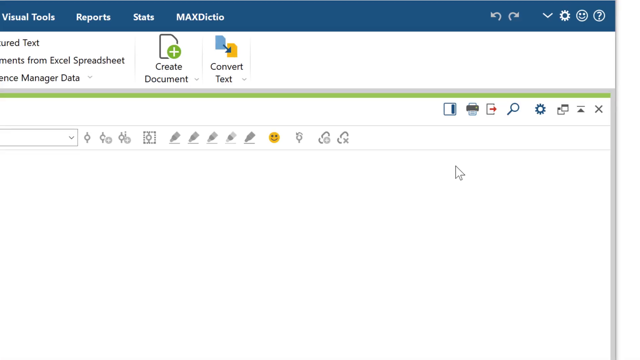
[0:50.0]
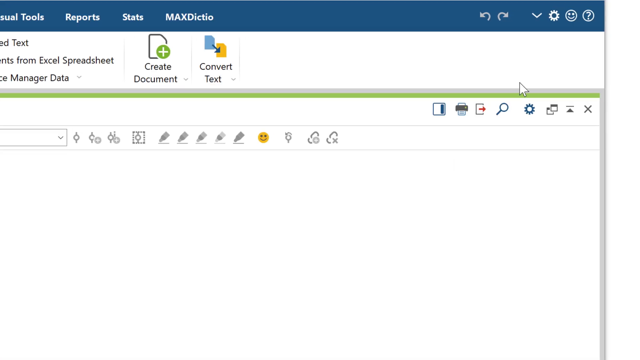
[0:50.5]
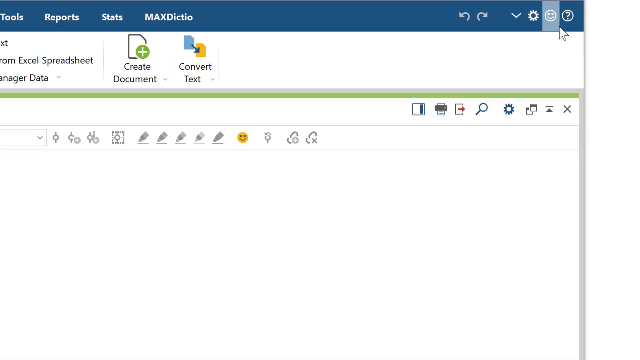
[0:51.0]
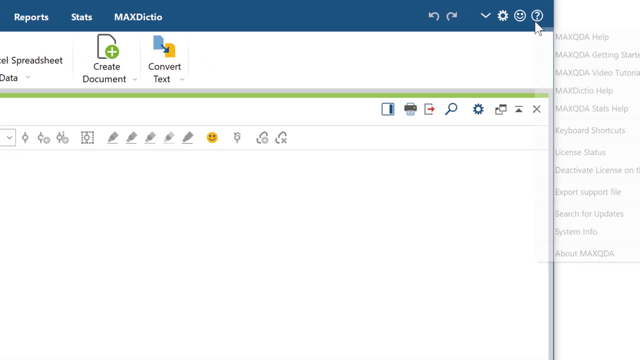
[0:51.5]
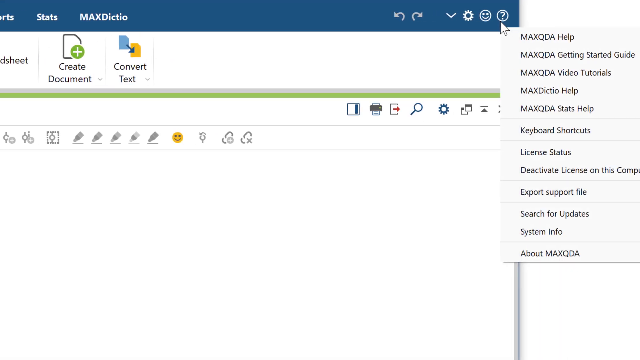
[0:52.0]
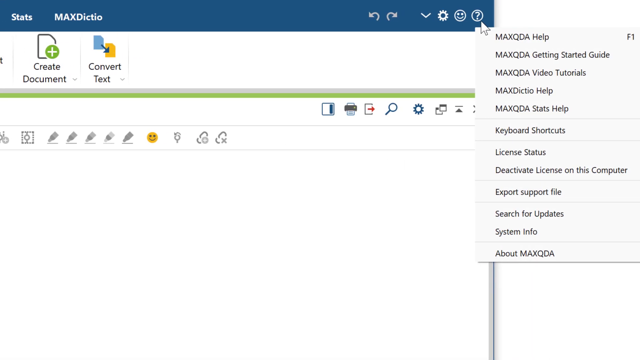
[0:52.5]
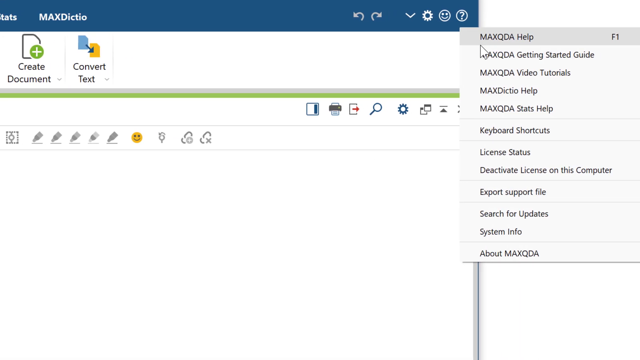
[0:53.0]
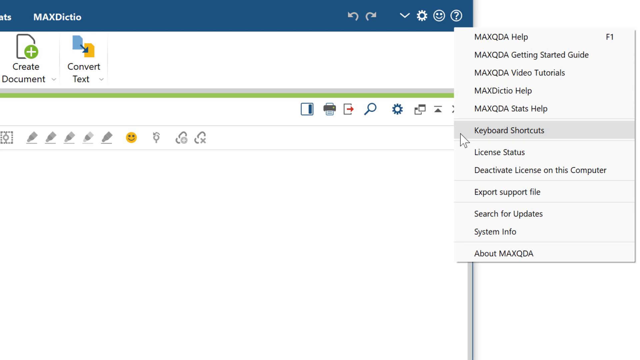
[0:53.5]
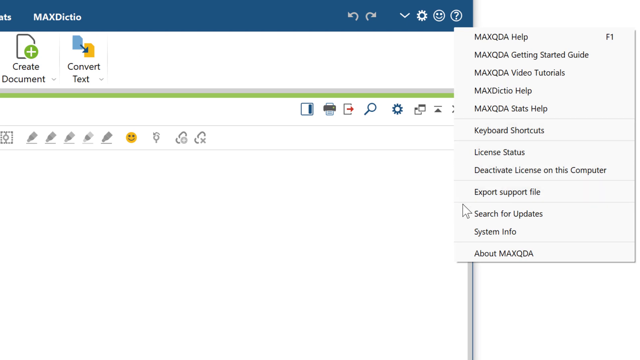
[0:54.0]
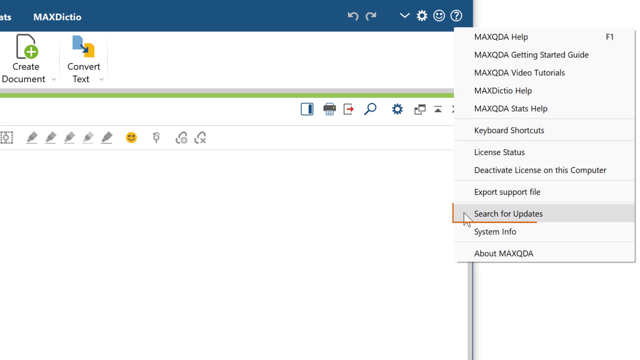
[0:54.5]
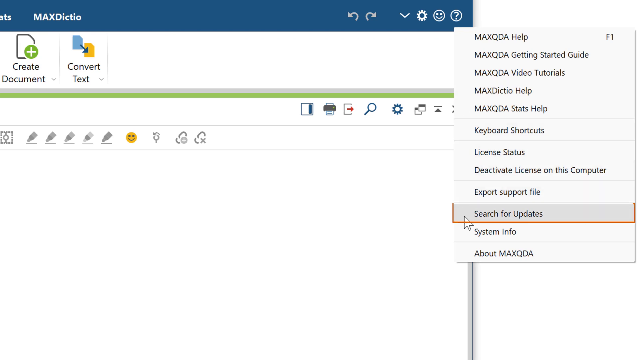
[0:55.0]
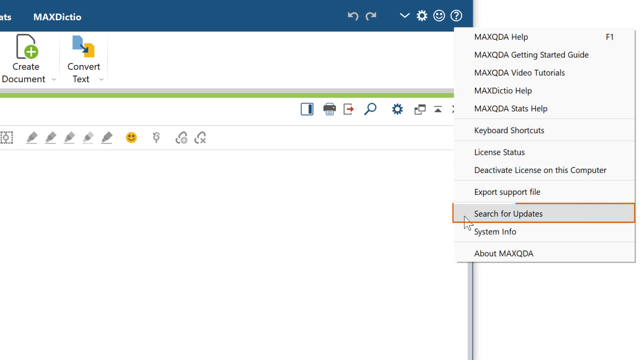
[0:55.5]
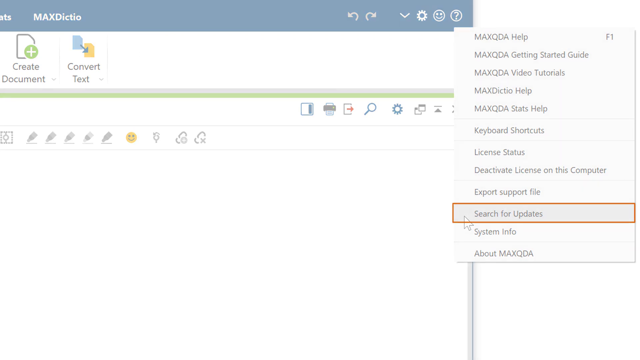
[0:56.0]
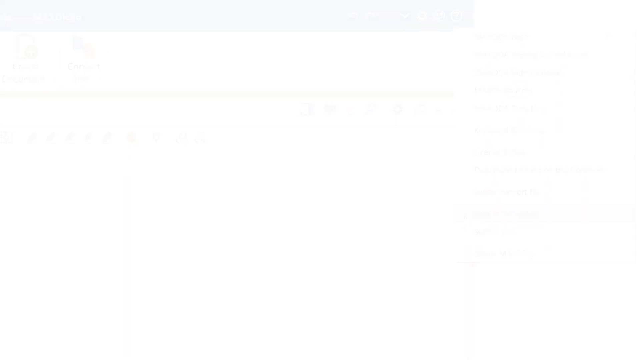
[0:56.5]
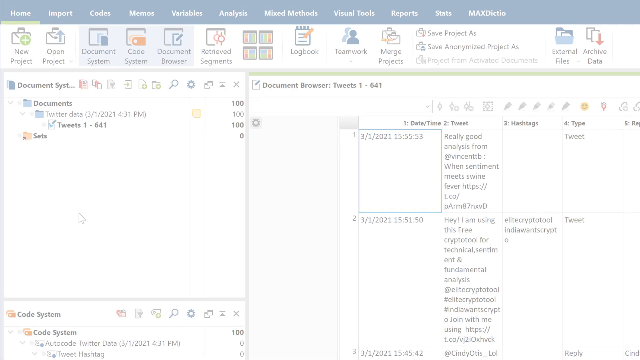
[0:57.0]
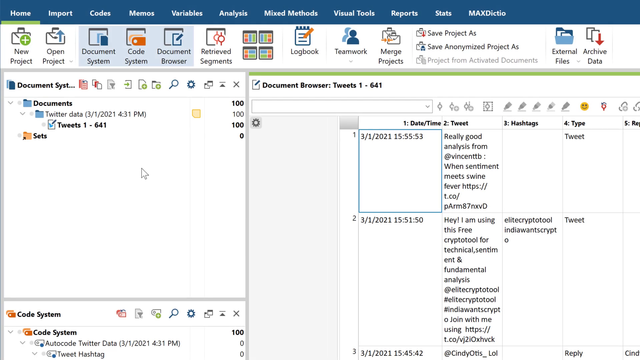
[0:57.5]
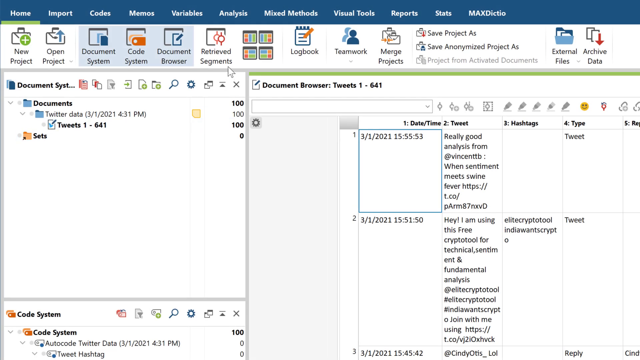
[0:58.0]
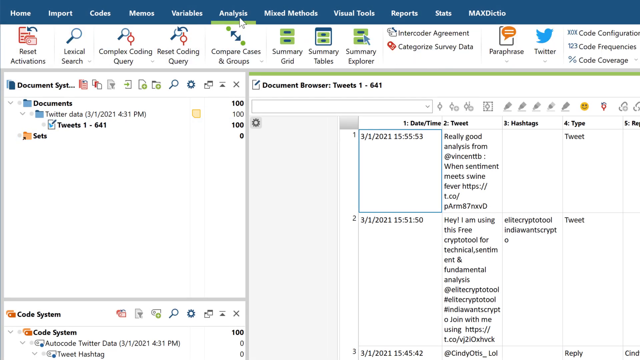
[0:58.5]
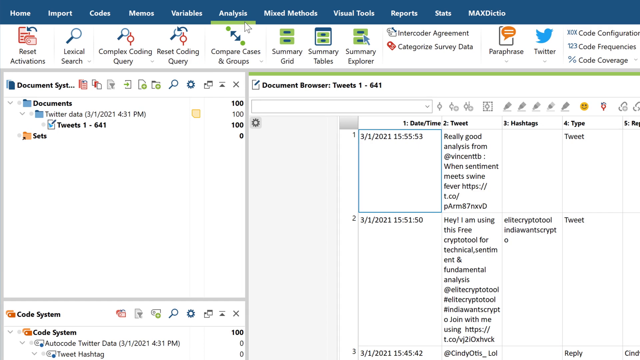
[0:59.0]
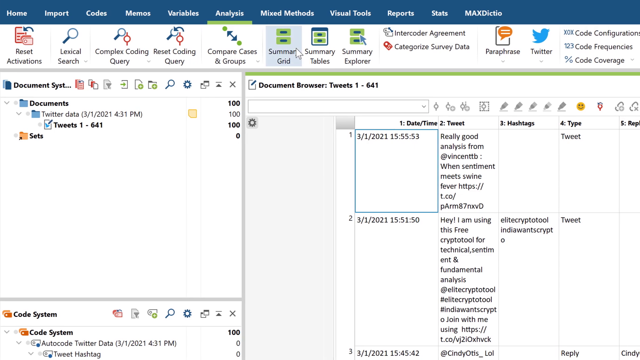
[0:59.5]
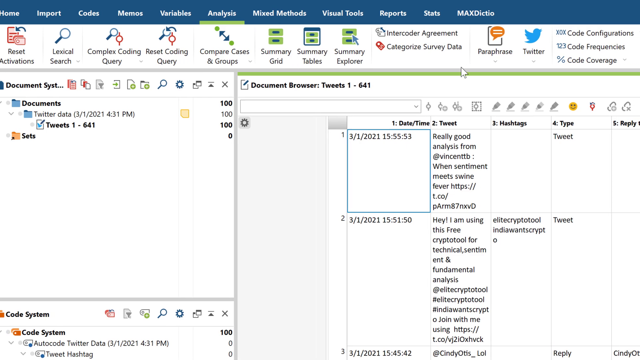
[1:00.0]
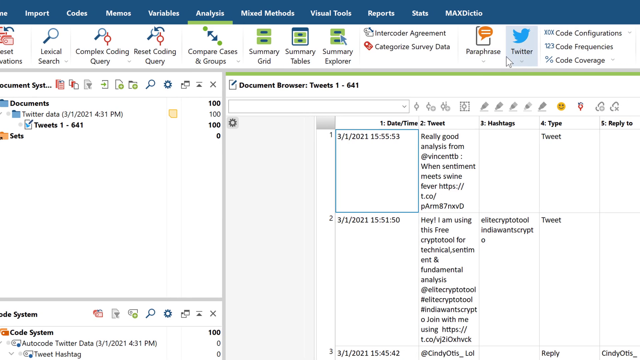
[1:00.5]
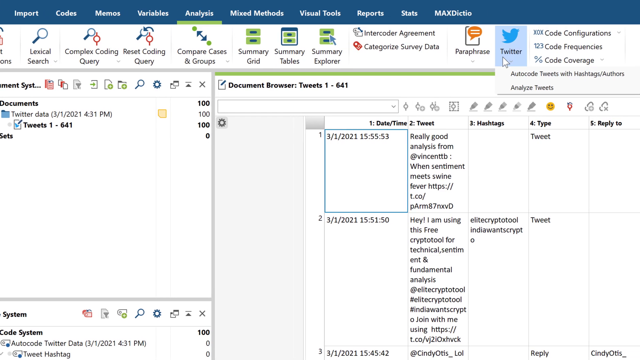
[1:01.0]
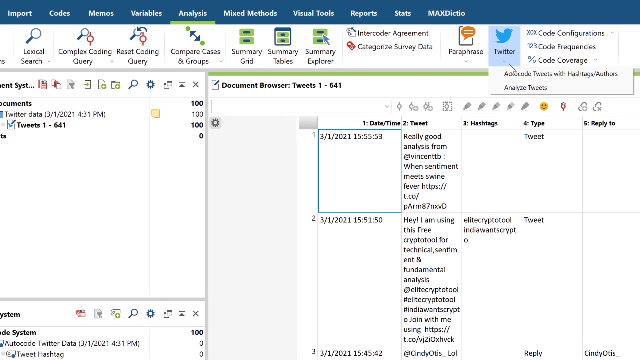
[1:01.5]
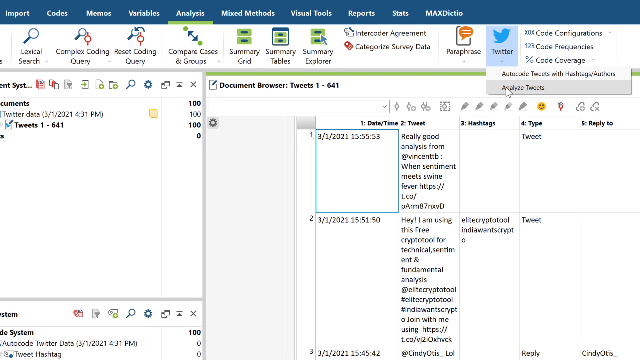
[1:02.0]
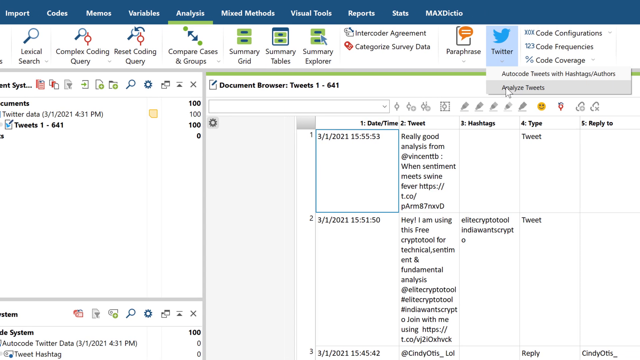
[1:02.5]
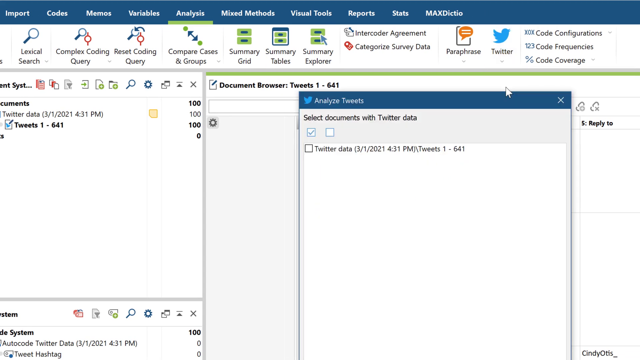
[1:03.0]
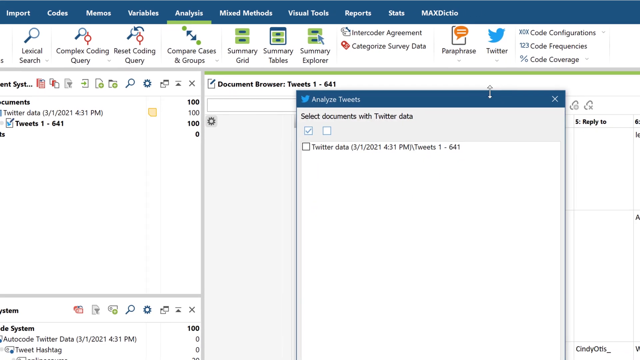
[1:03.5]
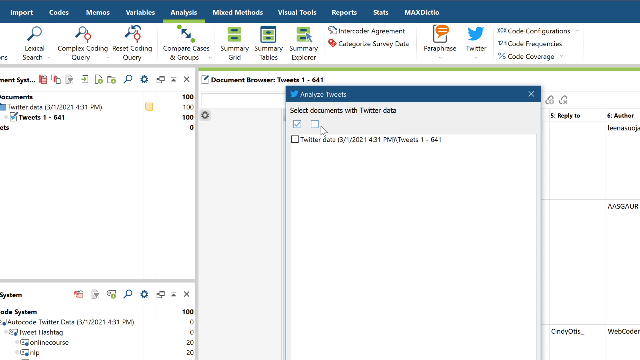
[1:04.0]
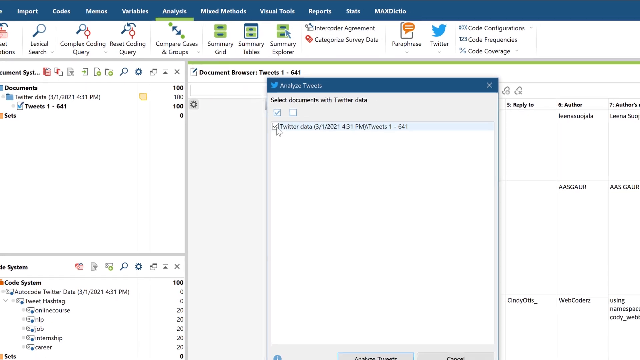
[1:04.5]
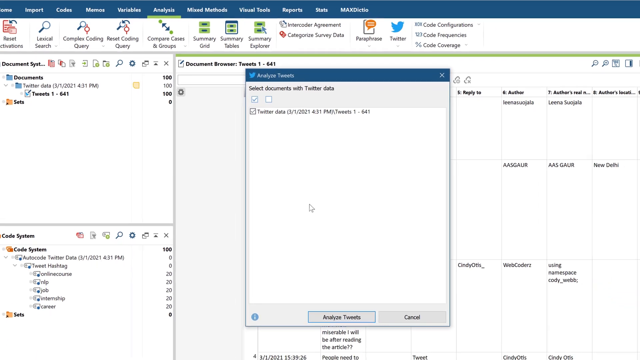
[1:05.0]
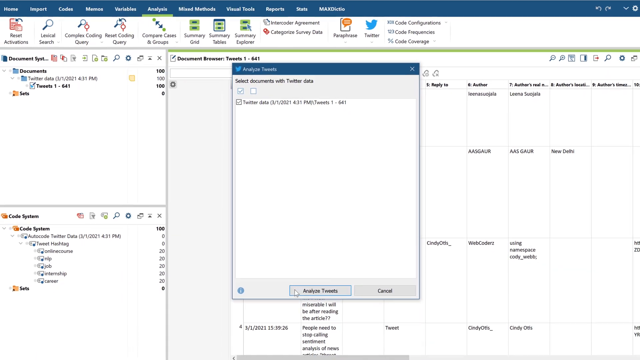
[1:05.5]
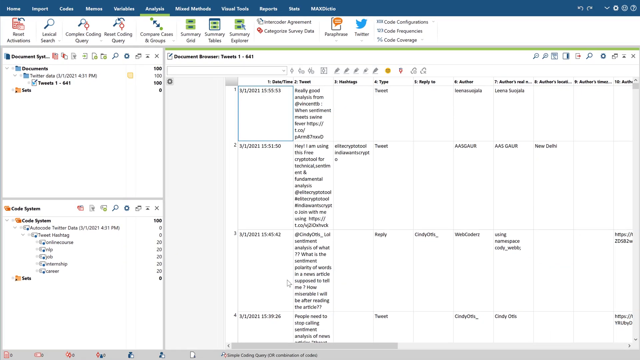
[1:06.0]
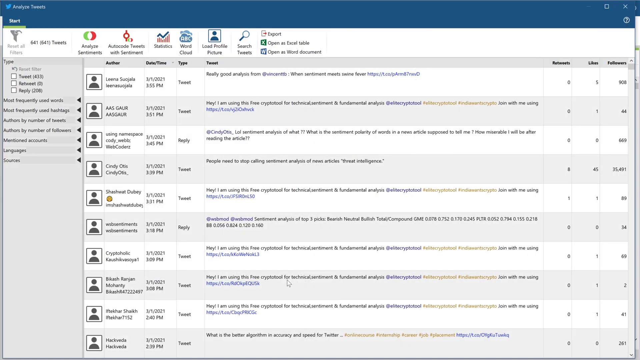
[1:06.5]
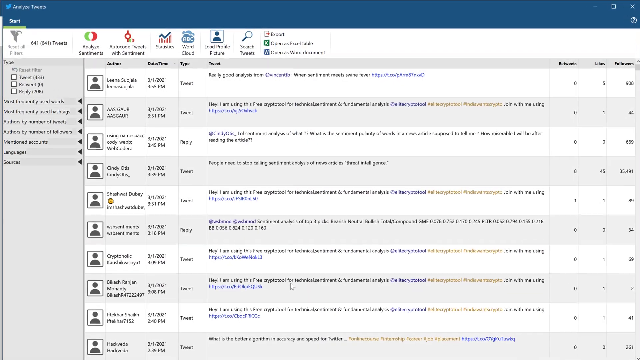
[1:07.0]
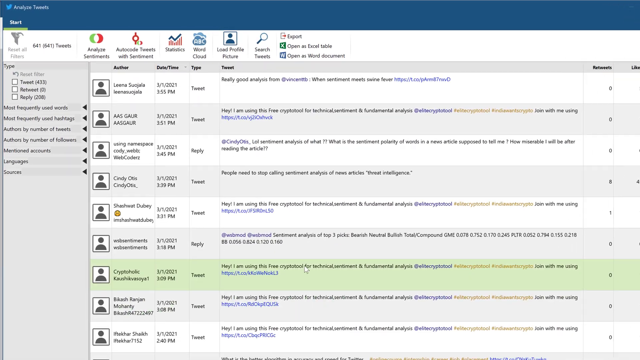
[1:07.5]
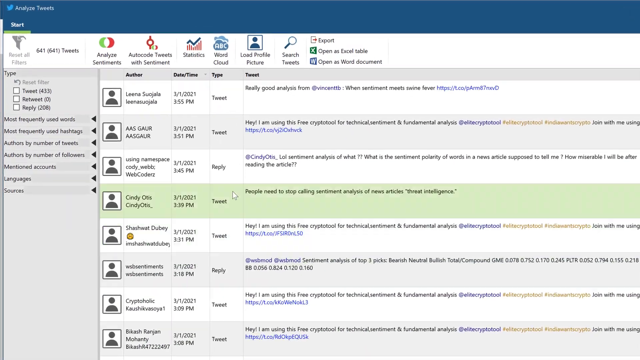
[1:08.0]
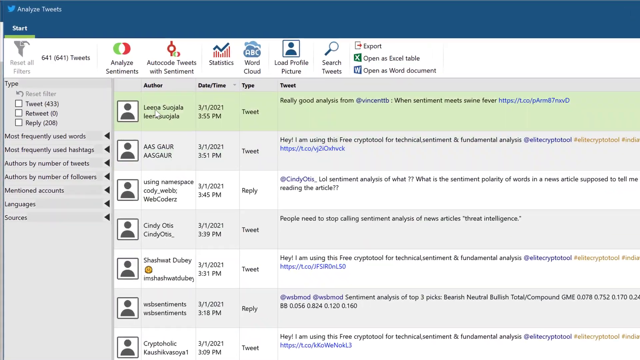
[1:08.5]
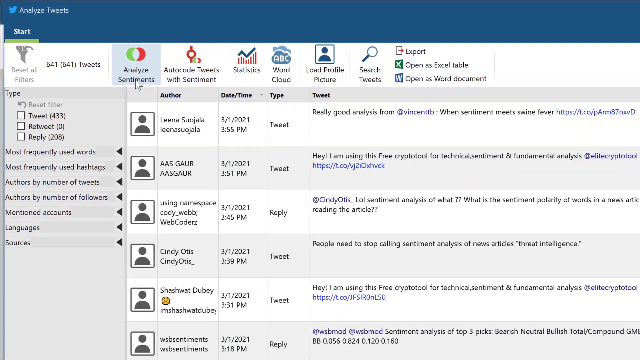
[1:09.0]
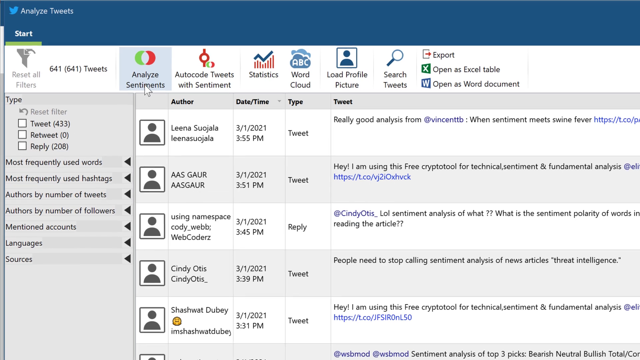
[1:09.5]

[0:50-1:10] The screen scrolls down a bit along the panel of categories, then wipes to a new screen where the cursor hovers over a question mark at the top of the bar and scrolls over the options in that question mark column, all labeled in a lighter gray. It moves to that corner and selects the option that says "search for updates." The screen then wipes and the dashboard appears at the top again with all its symbols and text. The cursor goes to a column that says "analyze tweets," selects twitter data, and returns to the analyze sentiments column. Next to it are columns for autocode tweets with sentiment, statistics, word cloud, load profile picture, and search tweets, plus options to export, open as an excel table, or open as a word document.